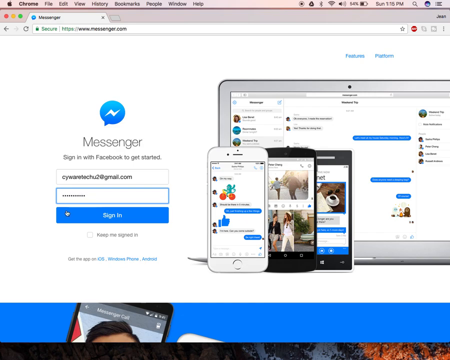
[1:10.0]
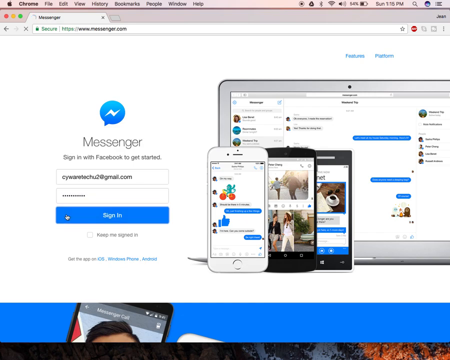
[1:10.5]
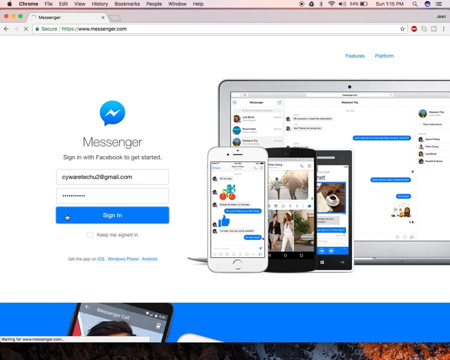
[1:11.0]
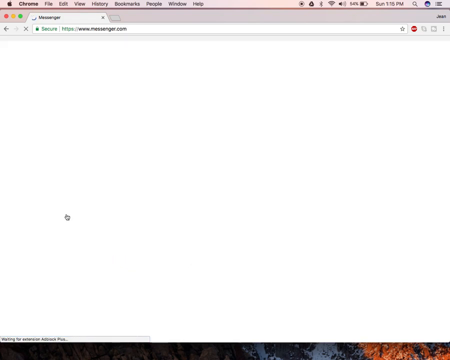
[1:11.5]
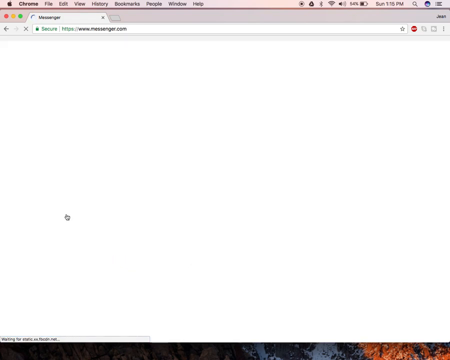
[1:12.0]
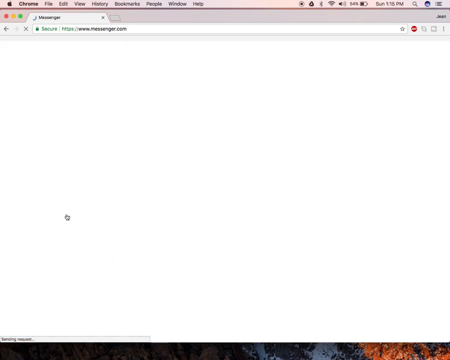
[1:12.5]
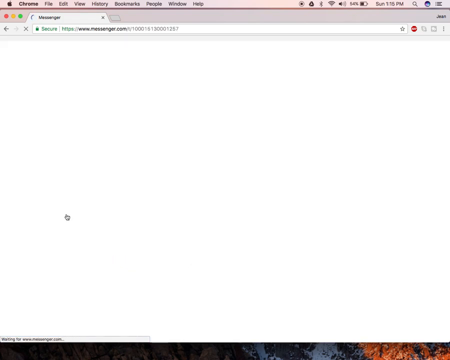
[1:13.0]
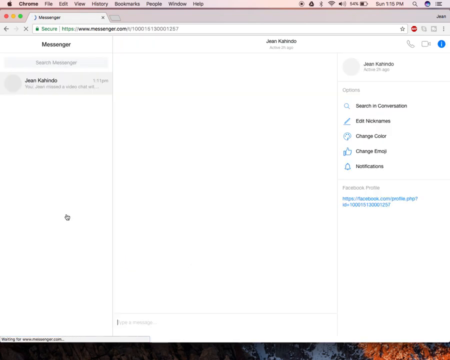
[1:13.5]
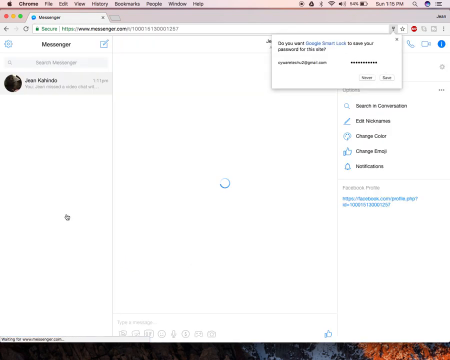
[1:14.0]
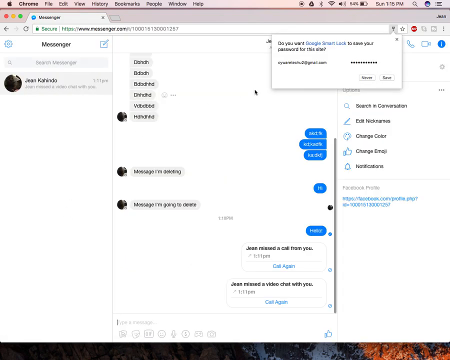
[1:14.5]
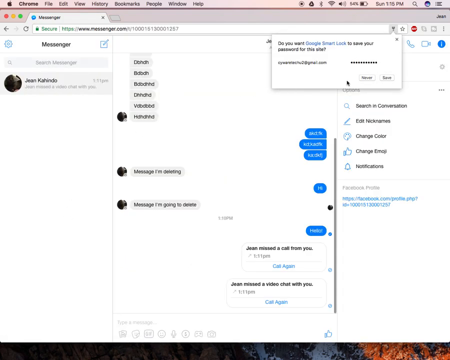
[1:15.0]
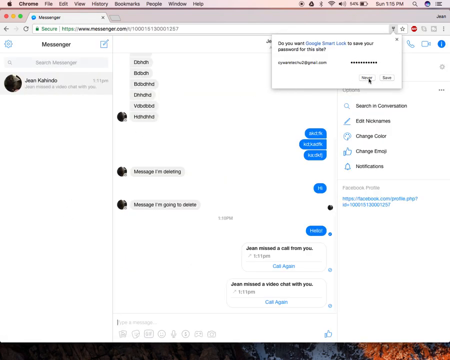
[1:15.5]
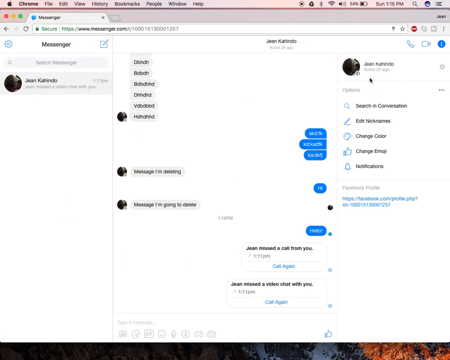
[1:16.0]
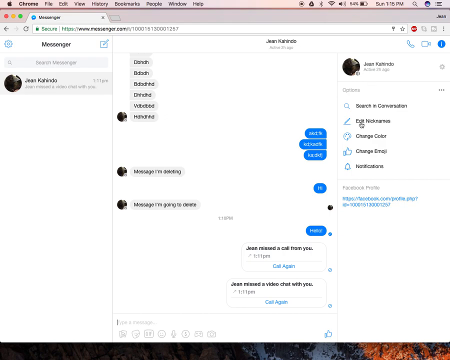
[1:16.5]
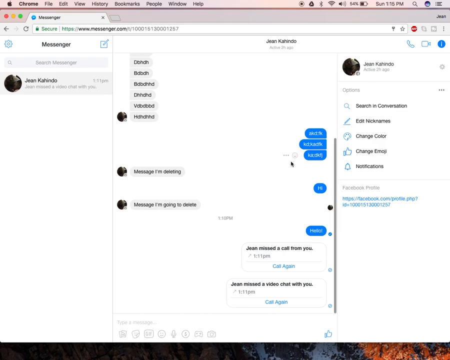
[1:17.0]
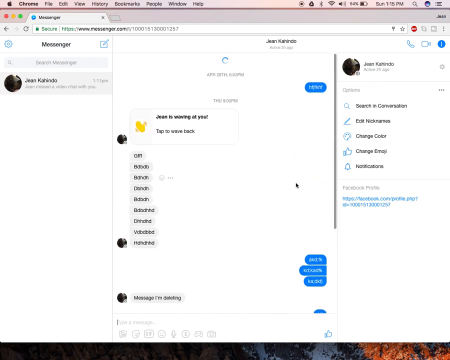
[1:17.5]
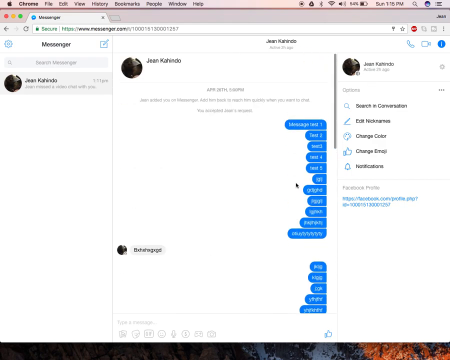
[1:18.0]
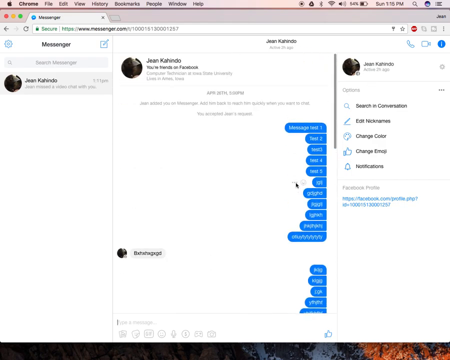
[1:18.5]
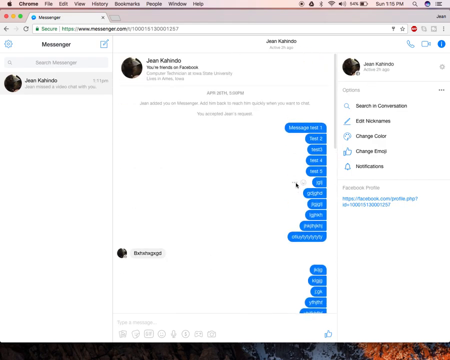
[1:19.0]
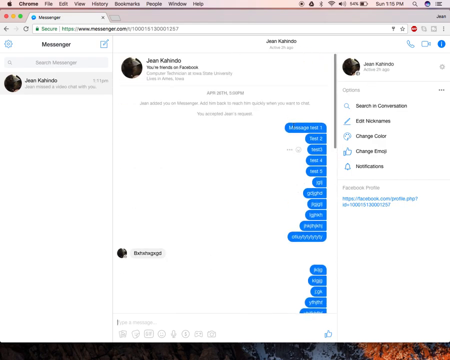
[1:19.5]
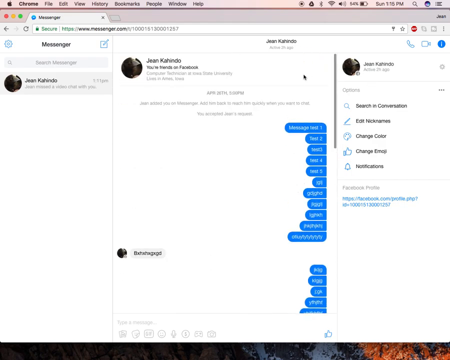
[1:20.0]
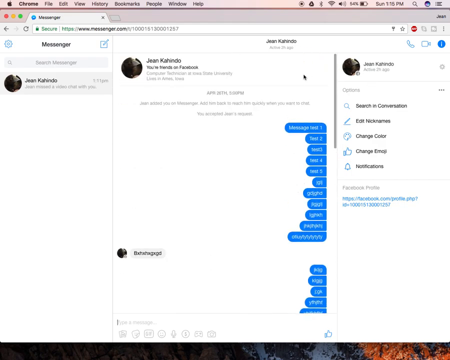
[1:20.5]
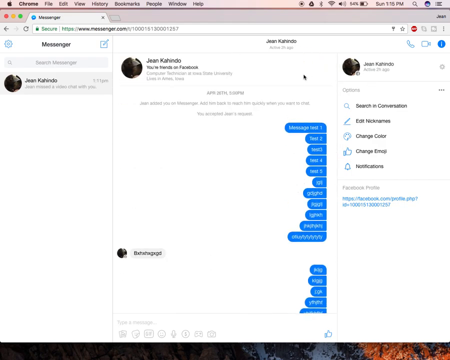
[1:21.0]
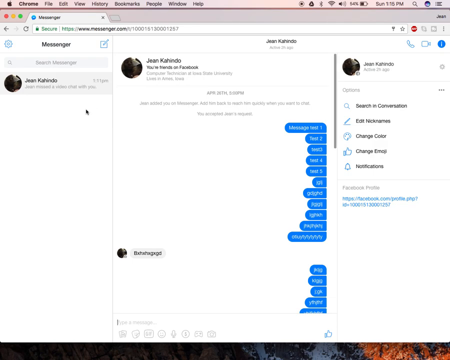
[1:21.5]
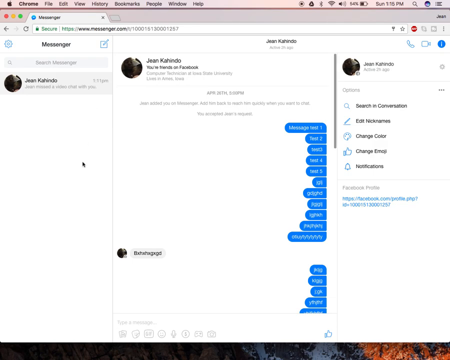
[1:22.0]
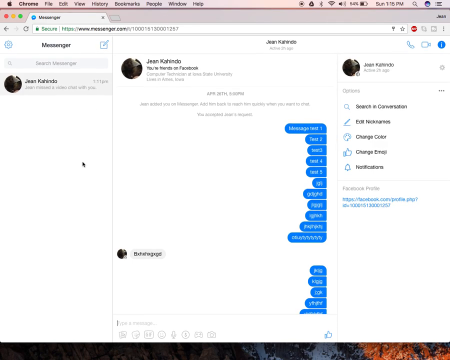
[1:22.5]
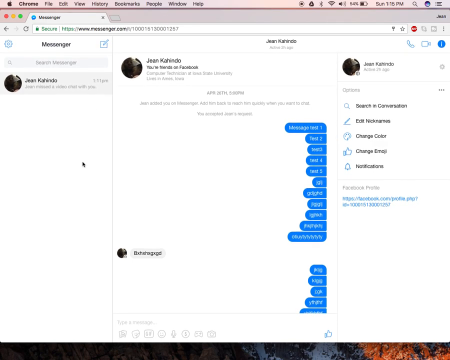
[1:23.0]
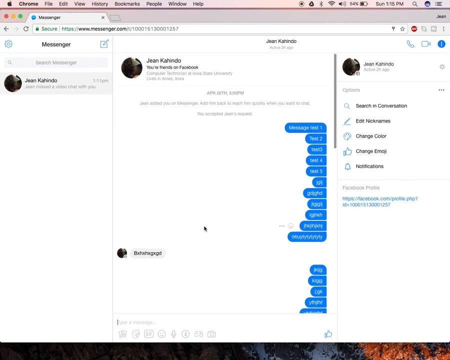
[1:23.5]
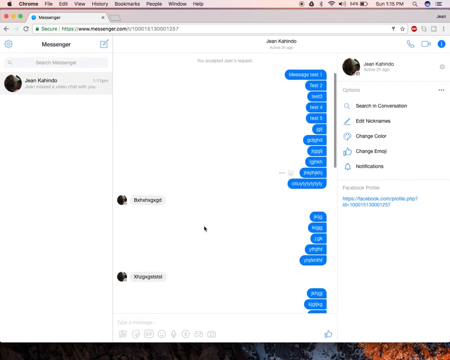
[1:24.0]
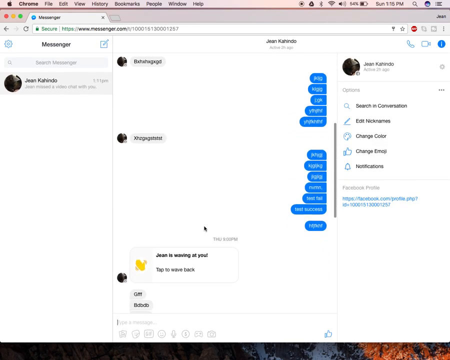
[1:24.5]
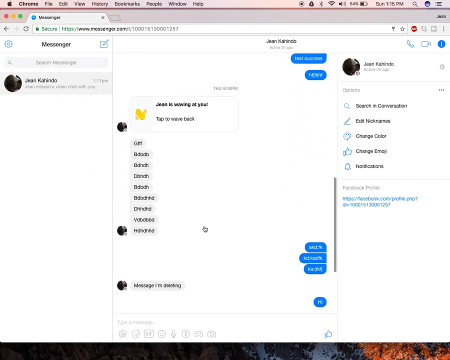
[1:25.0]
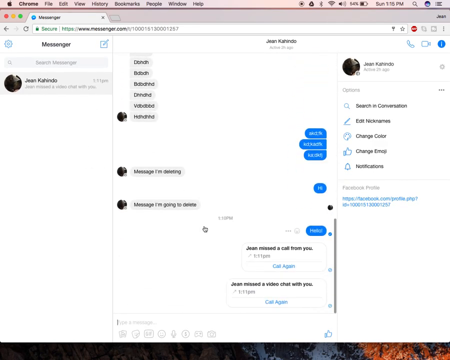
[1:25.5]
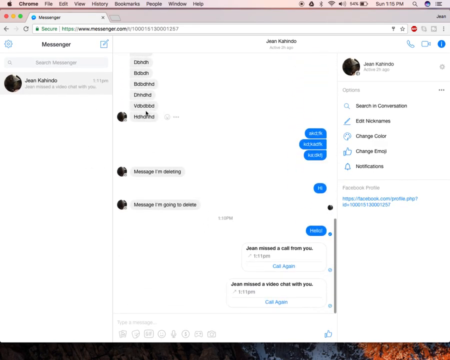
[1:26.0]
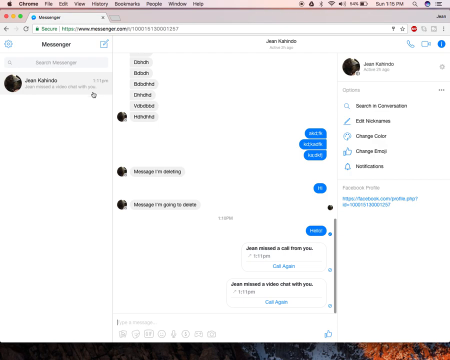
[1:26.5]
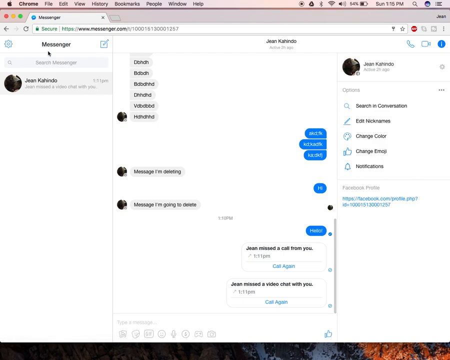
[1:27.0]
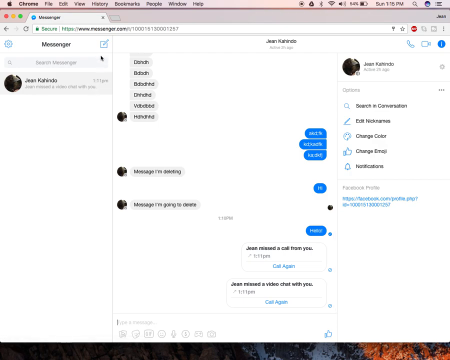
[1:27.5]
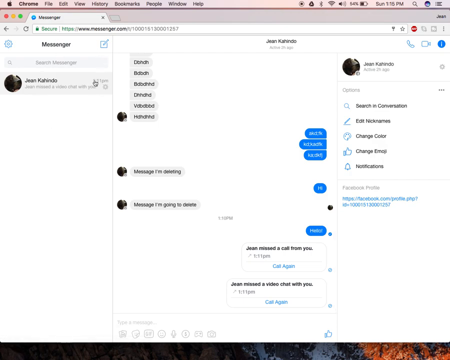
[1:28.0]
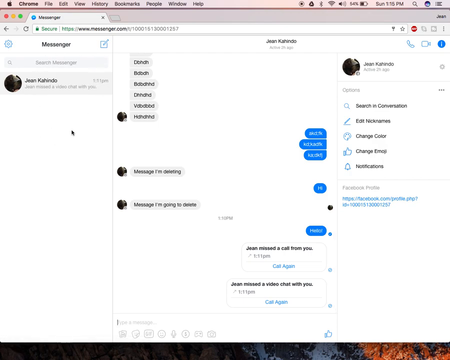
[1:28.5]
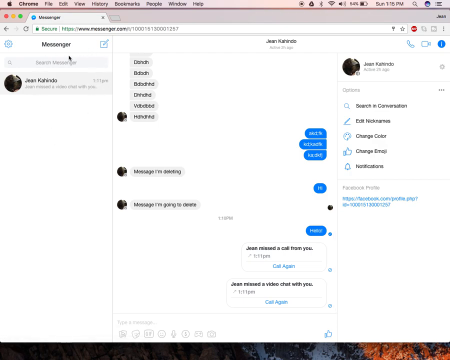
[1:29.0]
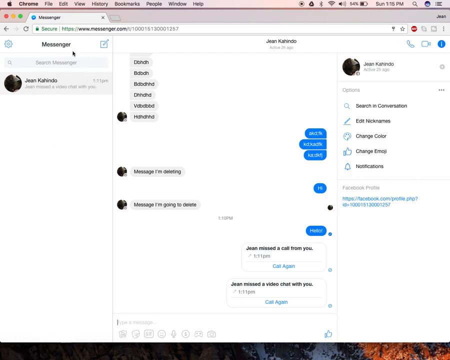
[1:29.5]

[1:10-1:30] The Messenger account is now signed in. A chat between two people and calls are visible, and the account with the username Jean Kahido appears on the left side. There is an option to save the password.